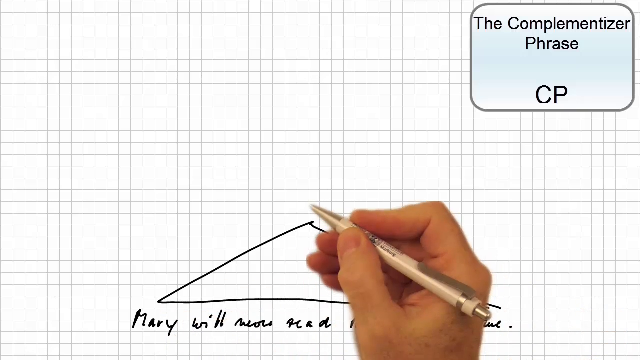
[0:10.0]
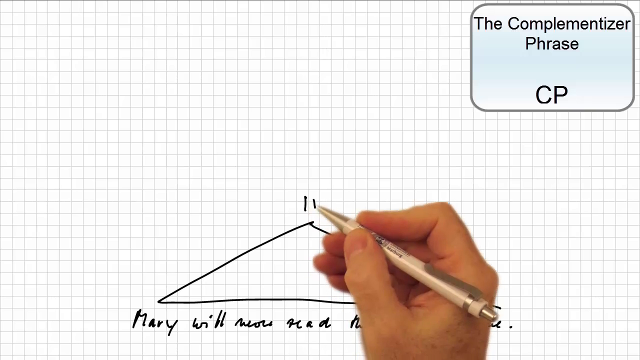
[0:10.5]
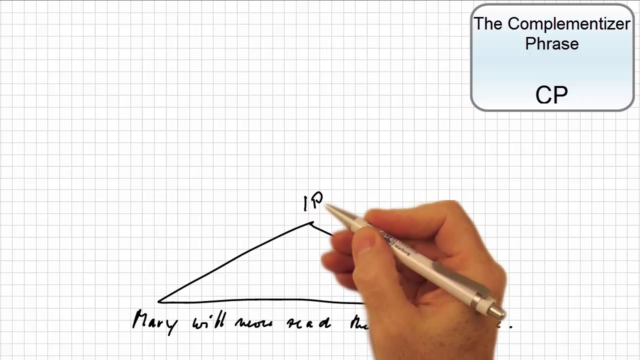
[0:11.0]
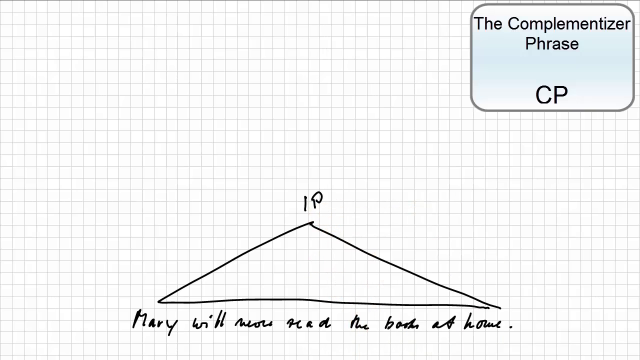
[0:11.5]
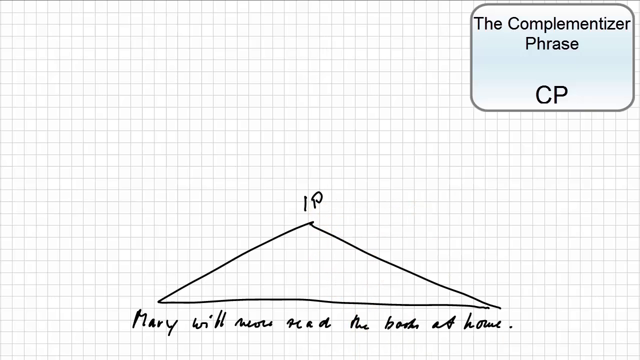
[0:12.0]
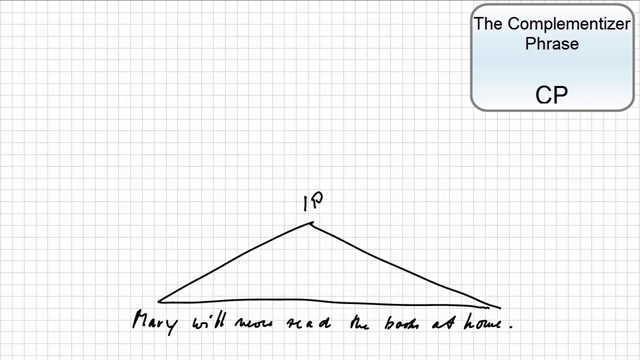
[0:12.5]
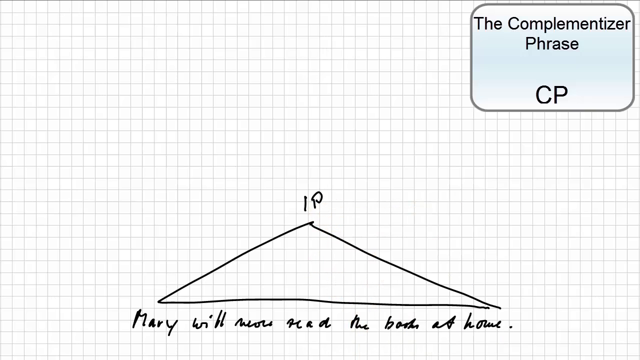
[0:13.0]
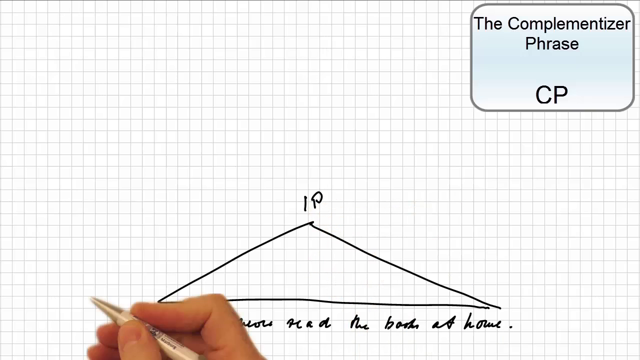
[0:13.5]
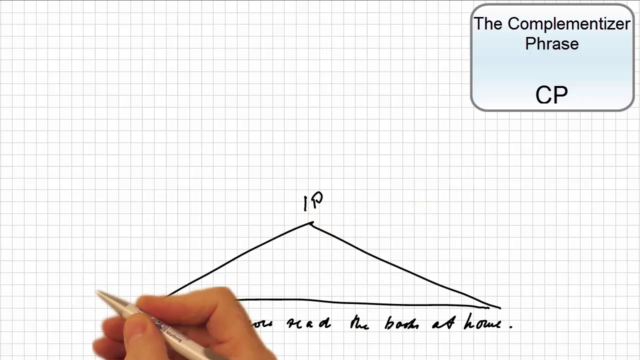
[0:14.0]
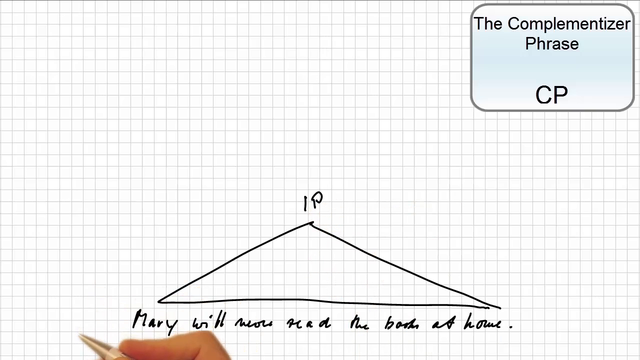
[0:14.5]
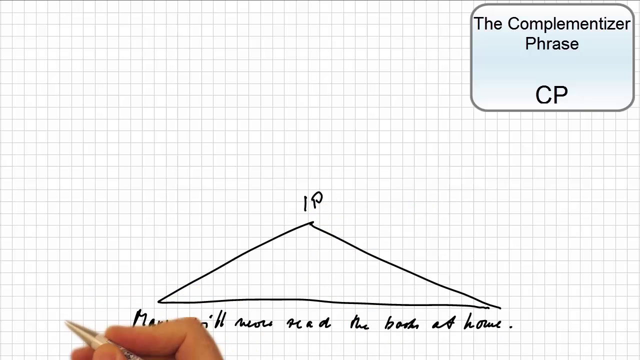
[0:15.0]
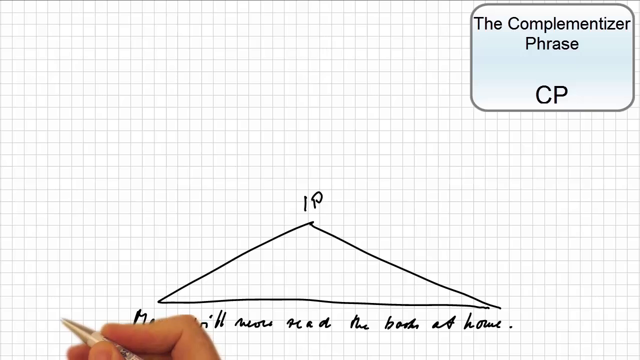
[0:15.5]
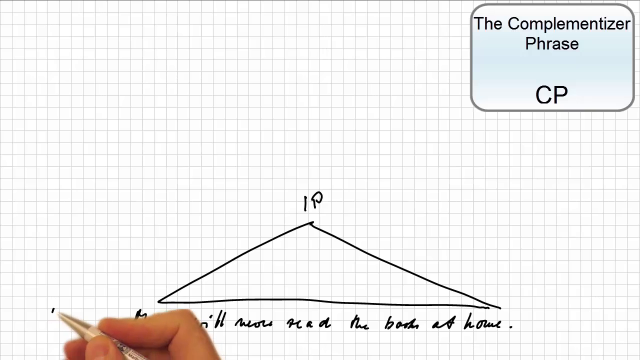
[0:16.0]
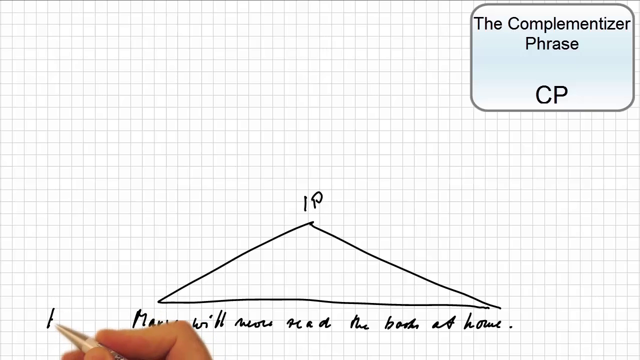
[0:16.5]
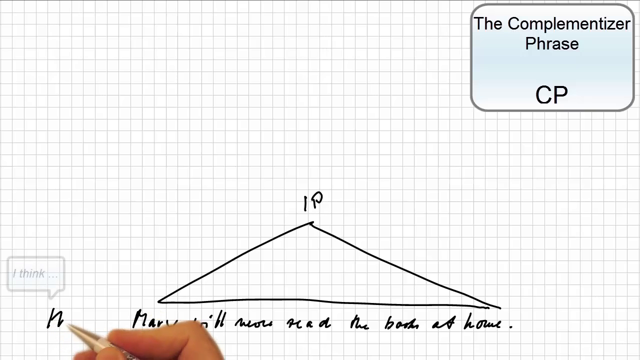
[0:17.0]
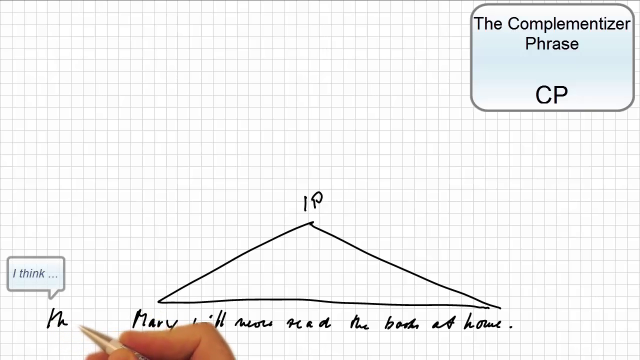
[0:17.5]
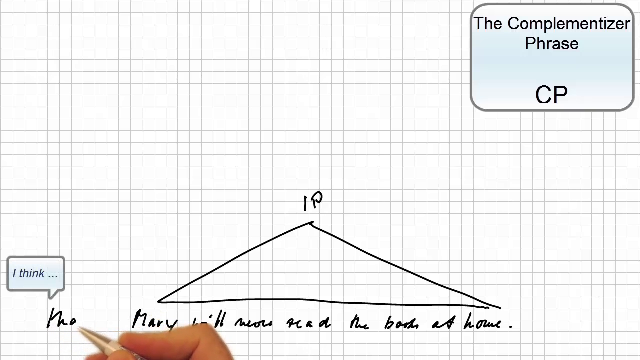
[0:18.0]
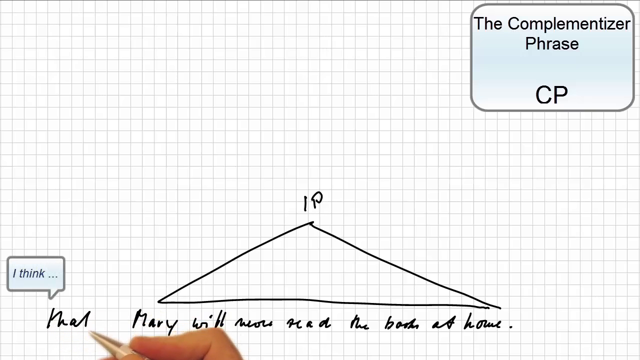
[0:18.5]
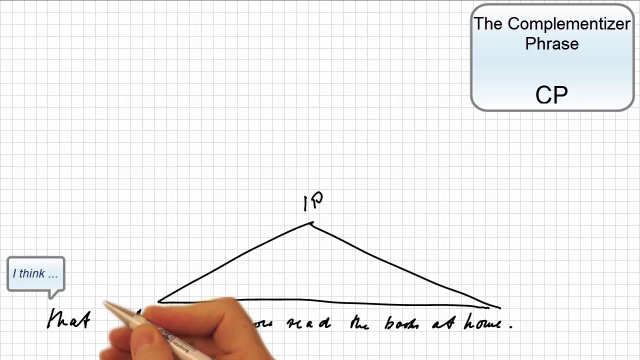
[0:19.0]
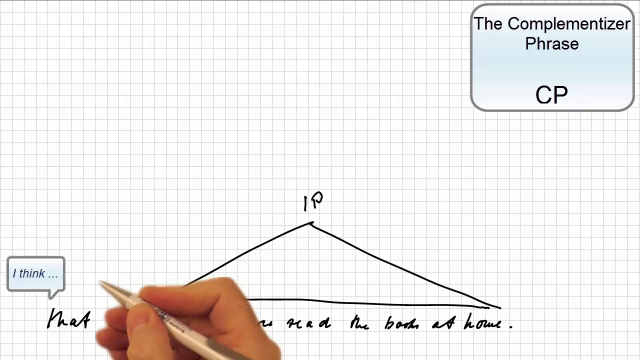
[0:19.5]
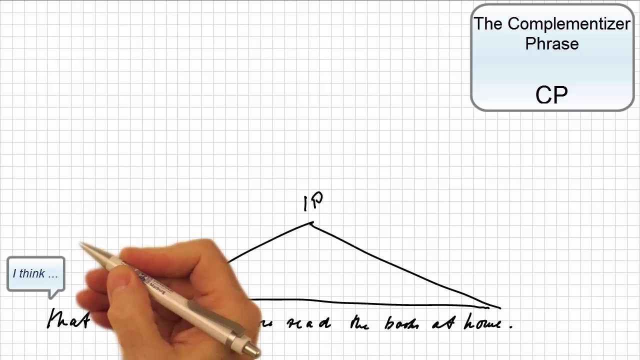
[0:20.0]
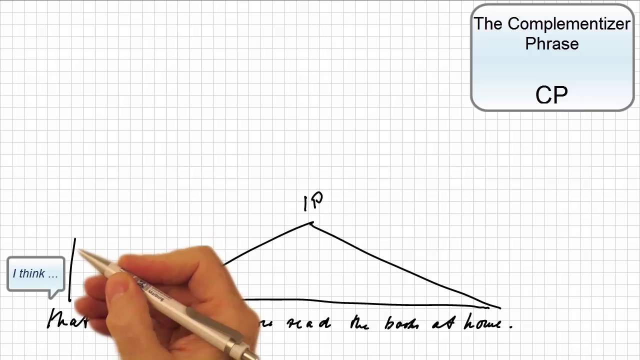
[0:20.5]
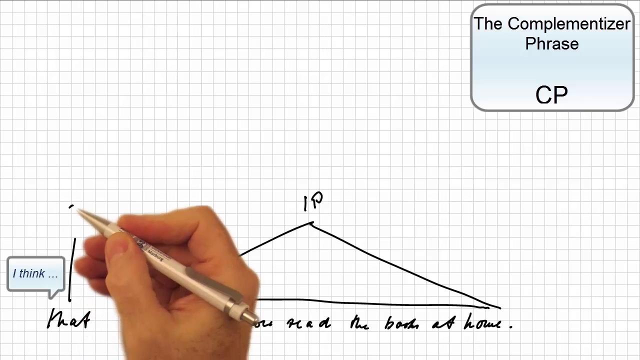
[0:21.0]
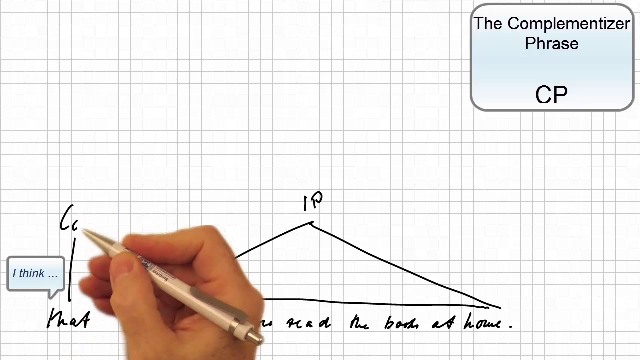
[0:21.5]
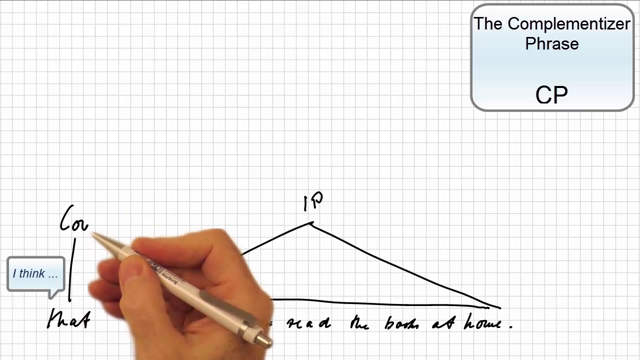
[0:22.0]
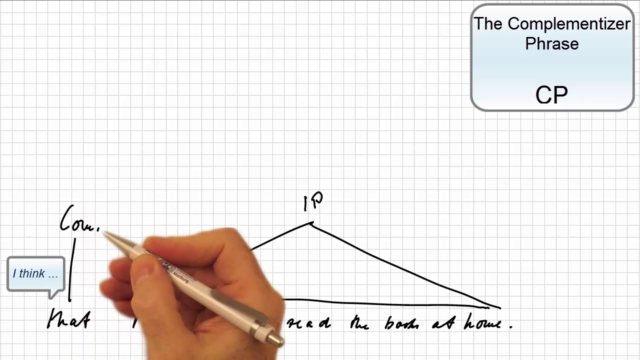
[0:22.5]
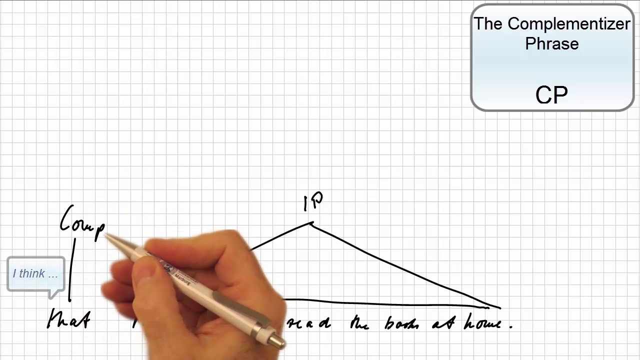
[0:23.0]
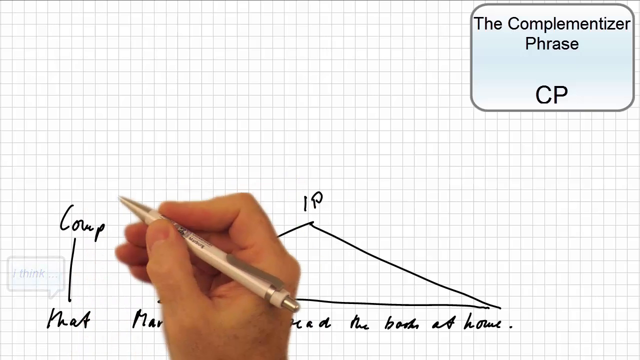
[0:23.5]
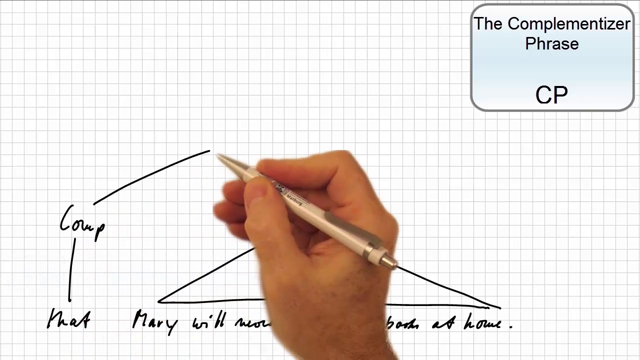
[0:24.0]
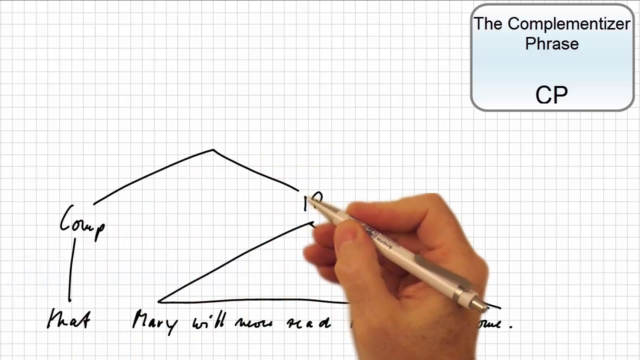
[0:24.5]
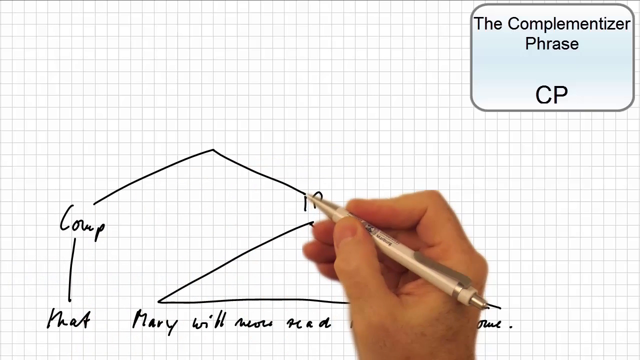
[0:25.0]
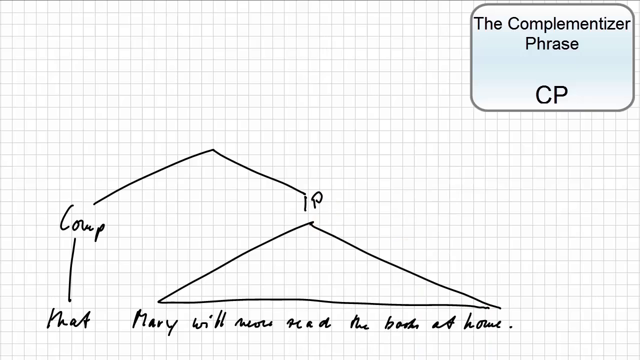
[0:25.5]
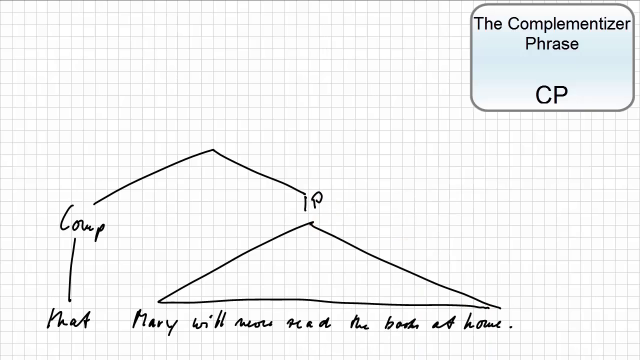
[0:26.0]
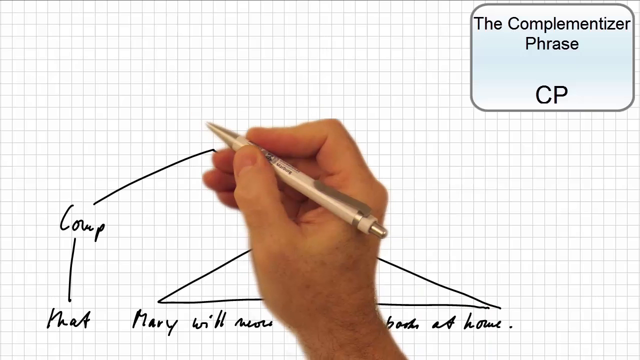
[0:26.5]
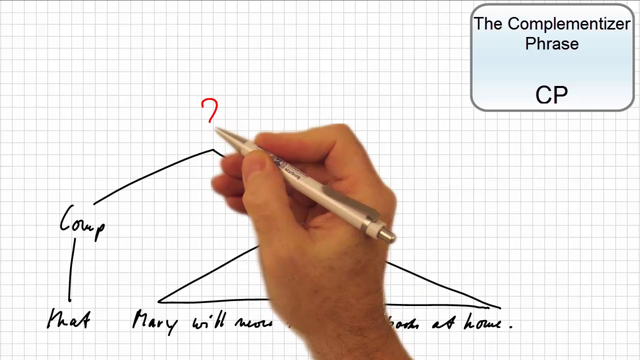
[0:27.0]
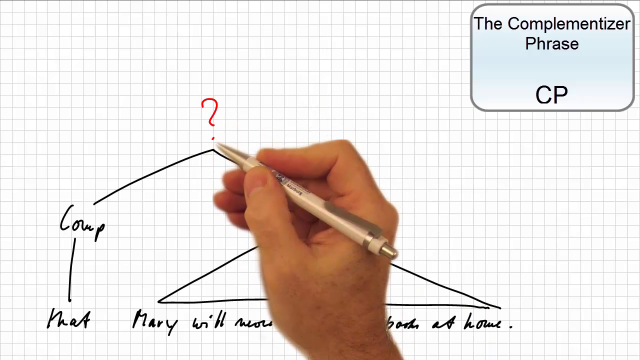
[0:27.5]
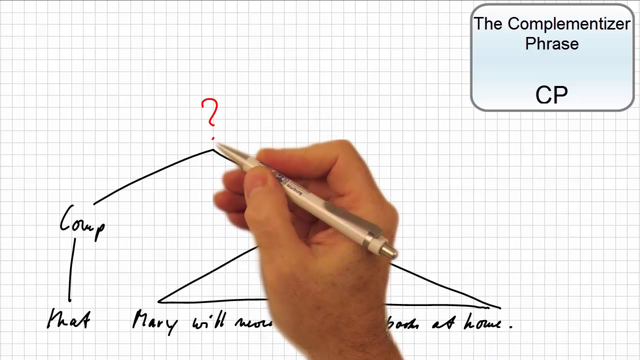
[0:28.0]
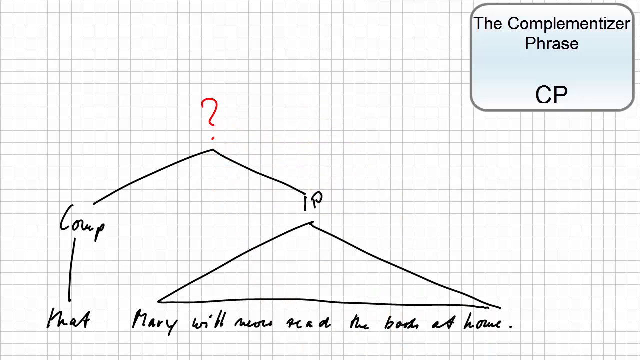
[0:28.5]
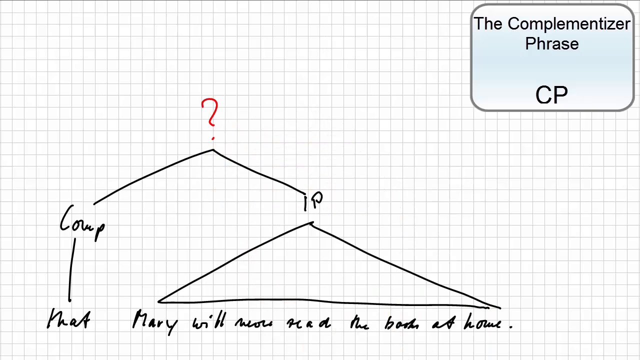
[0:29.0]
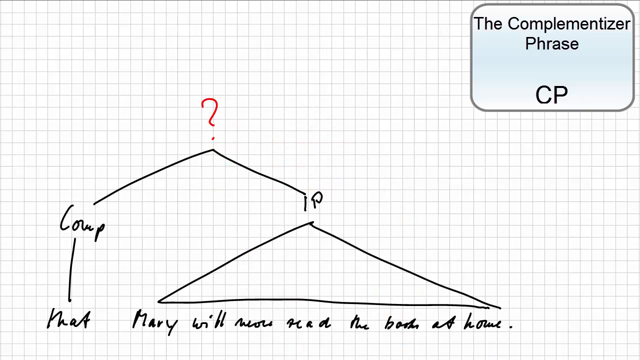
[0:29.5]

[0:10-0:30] In the top right there is a box with "CP" written over it. A man holds a cream-colored pen in his right hand. A triangle is drawn on notebook paper, and under it is the sentence "Mary will now read the book at home". At the top of the triangle he writes "IP". He draws a line to "comp" and to "IP", and two points are created that form a kind of roof. At the top of the roof, the person has drawn a red question mark. Everything else is in black.